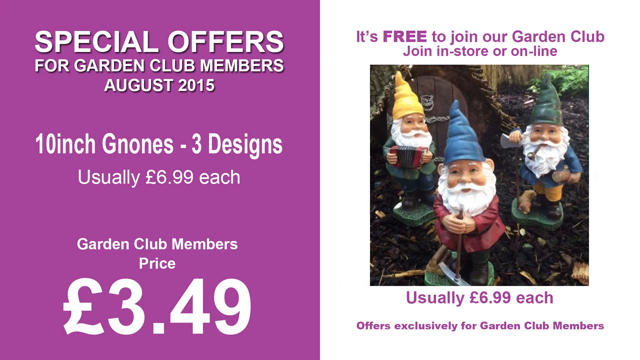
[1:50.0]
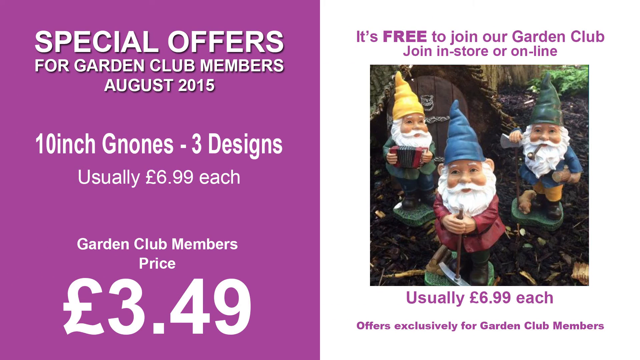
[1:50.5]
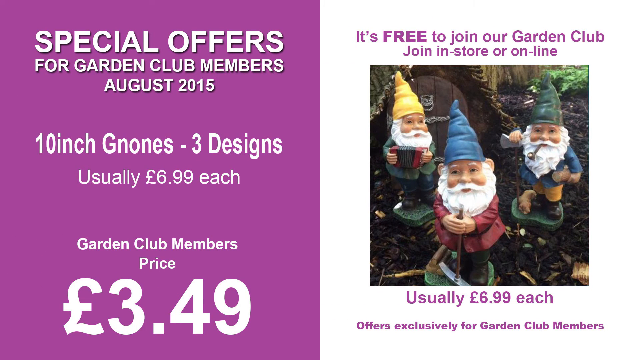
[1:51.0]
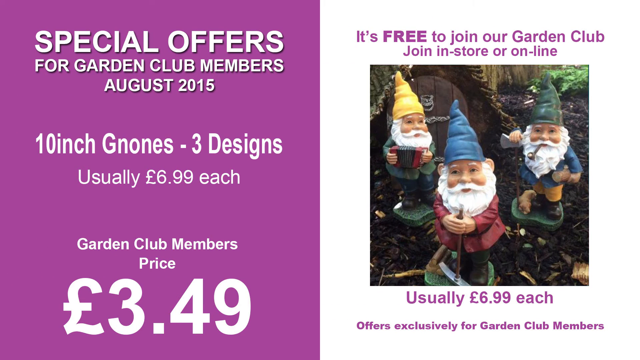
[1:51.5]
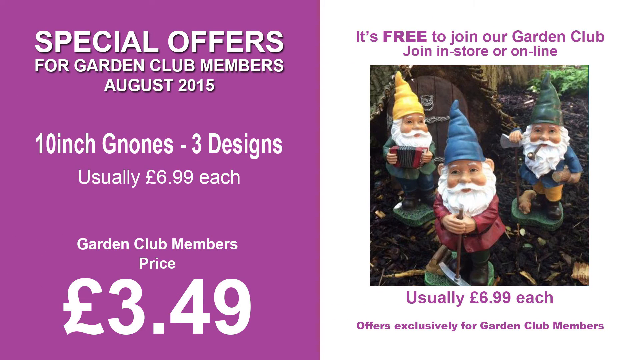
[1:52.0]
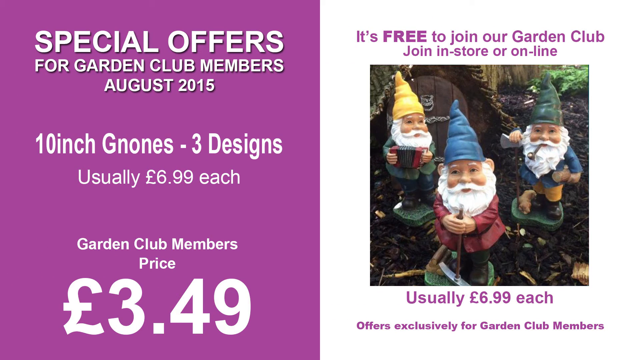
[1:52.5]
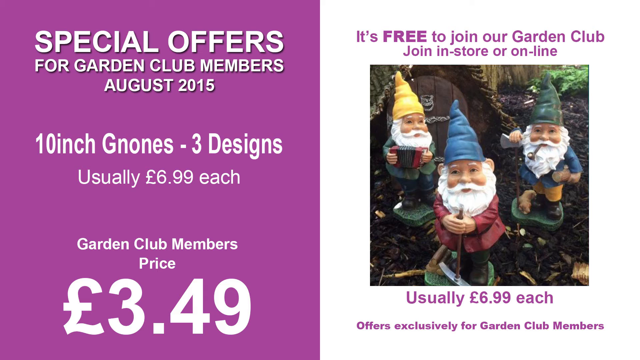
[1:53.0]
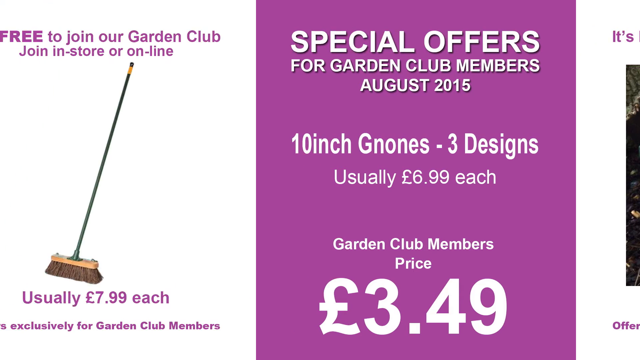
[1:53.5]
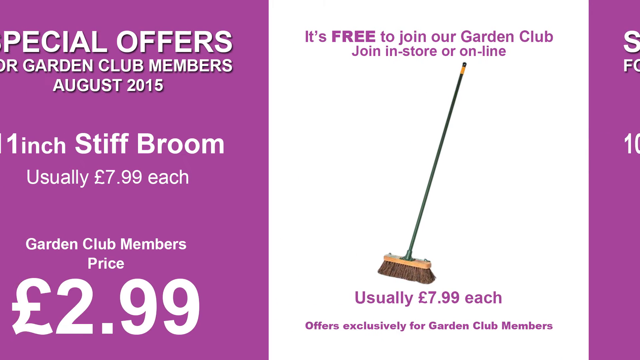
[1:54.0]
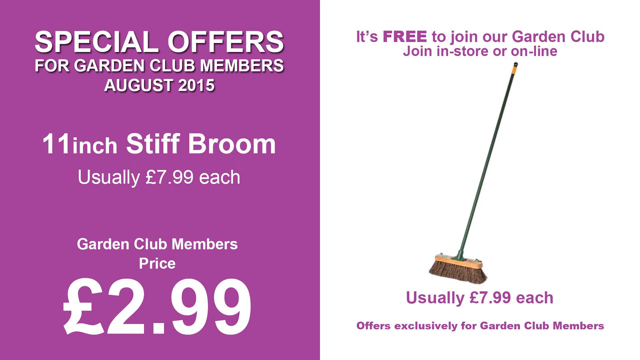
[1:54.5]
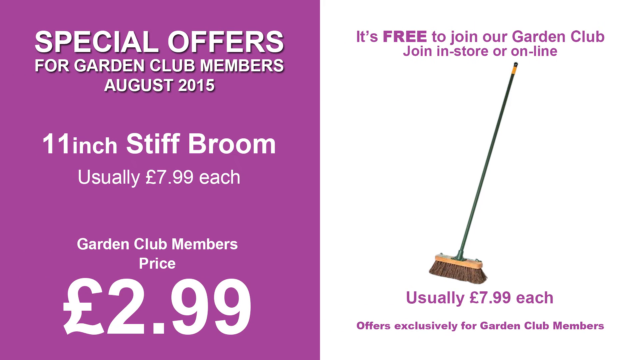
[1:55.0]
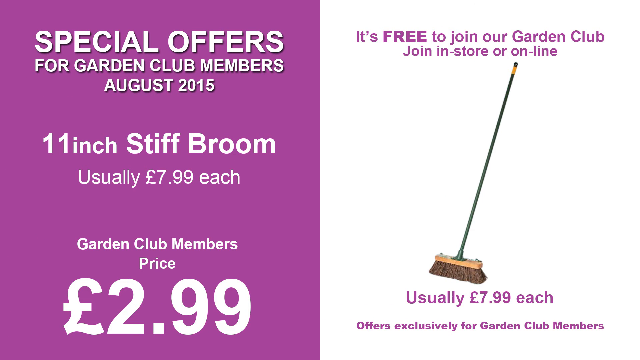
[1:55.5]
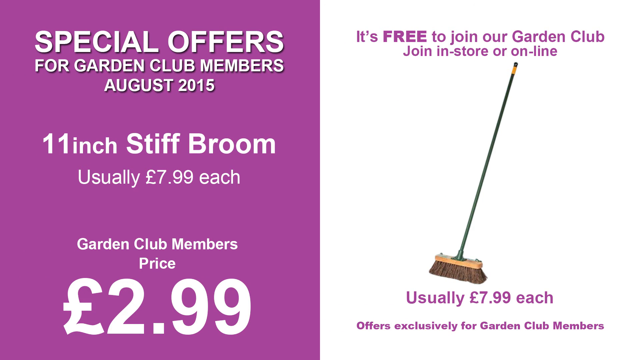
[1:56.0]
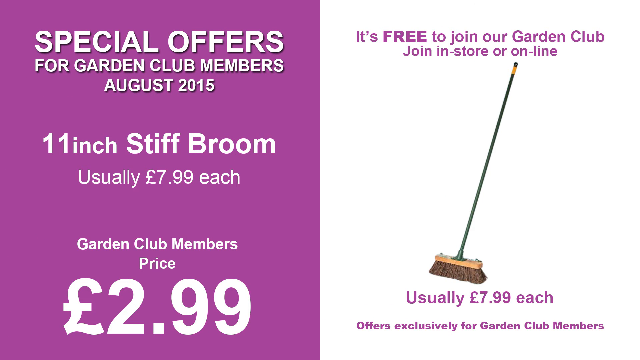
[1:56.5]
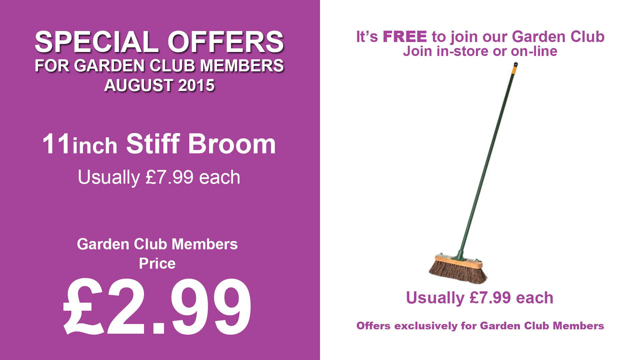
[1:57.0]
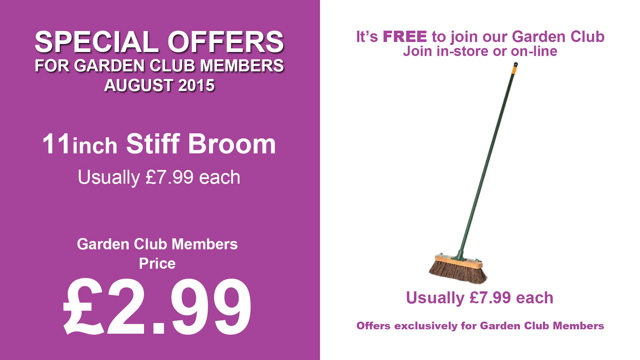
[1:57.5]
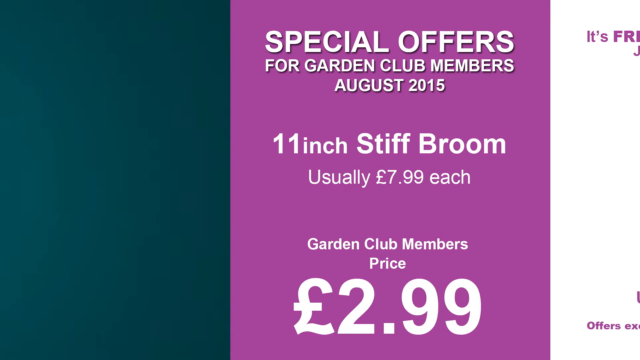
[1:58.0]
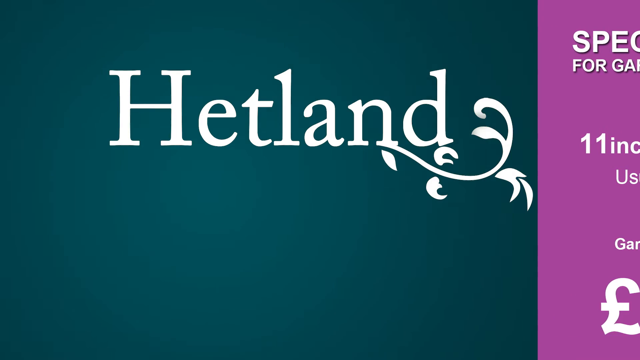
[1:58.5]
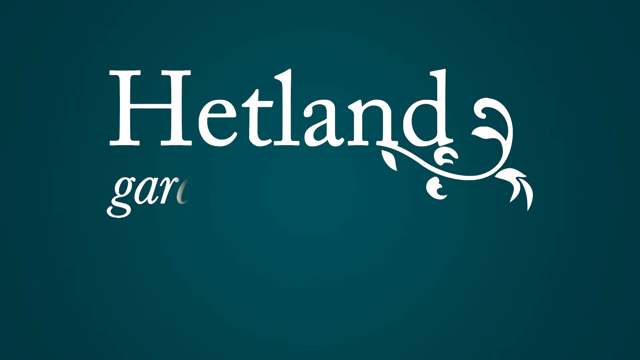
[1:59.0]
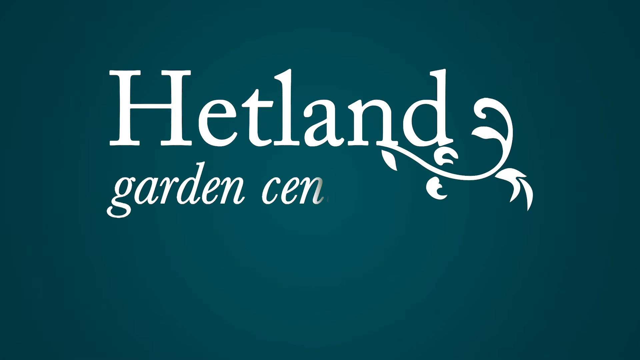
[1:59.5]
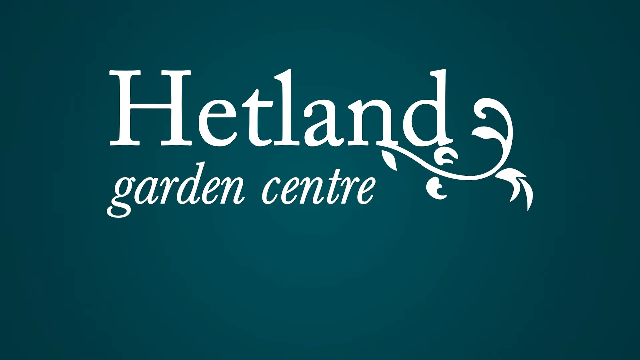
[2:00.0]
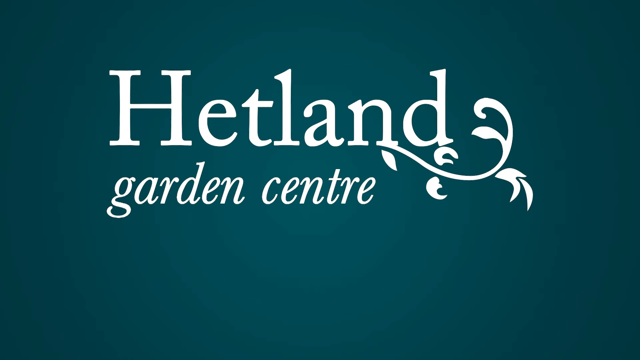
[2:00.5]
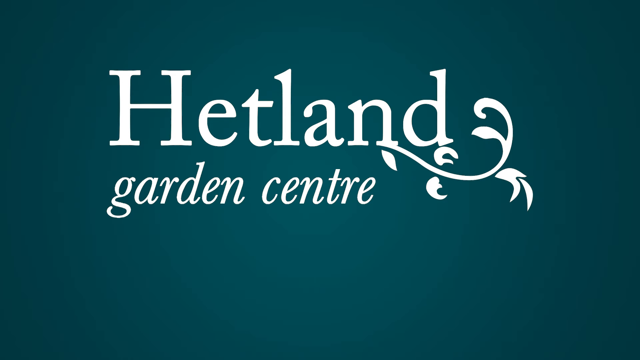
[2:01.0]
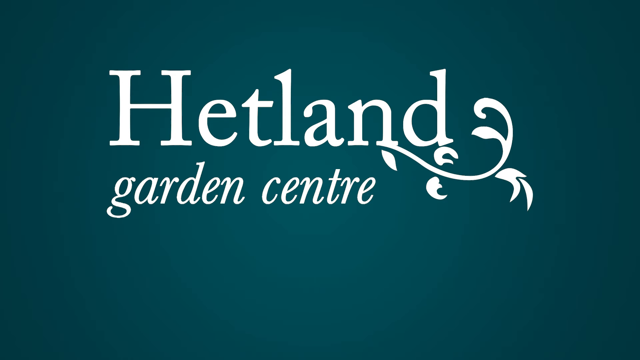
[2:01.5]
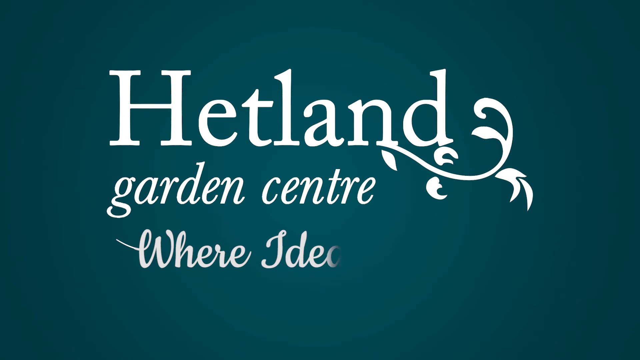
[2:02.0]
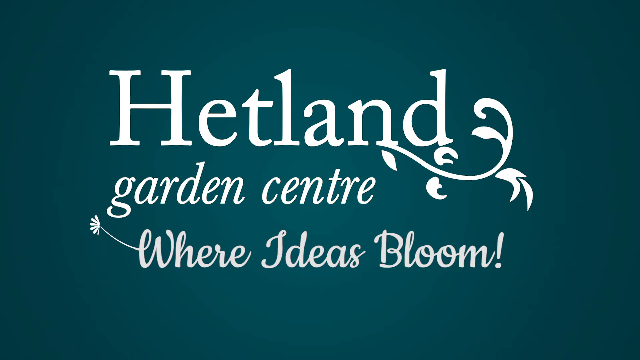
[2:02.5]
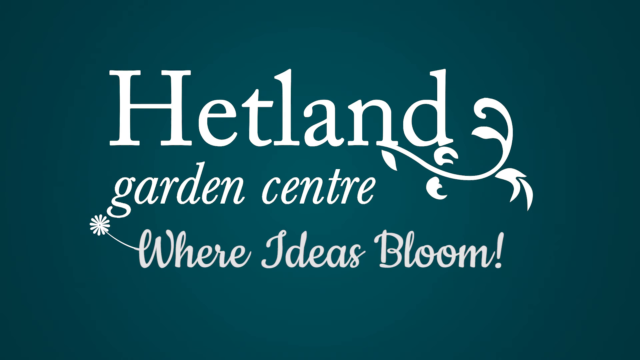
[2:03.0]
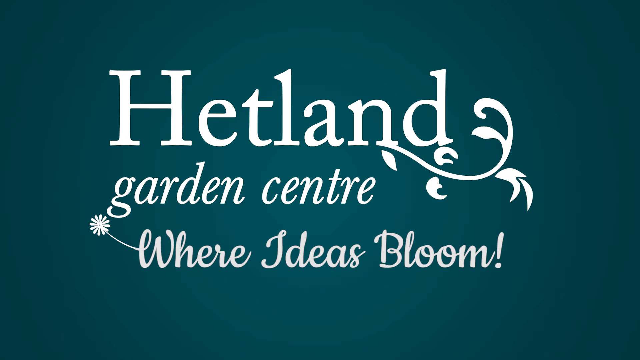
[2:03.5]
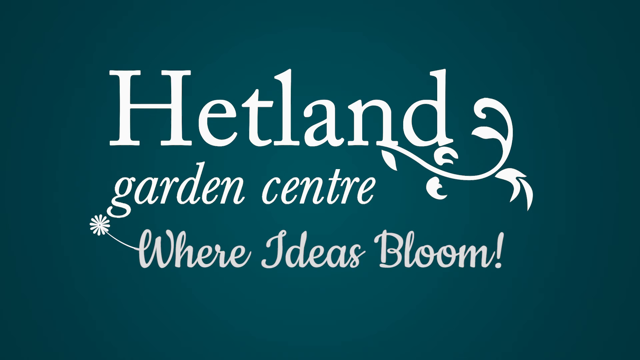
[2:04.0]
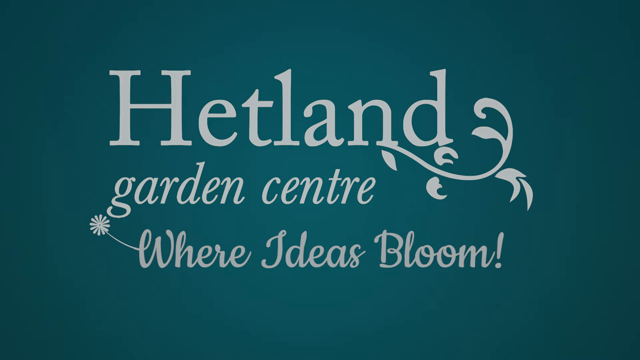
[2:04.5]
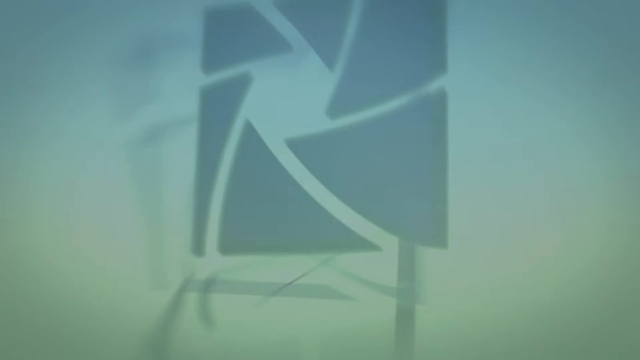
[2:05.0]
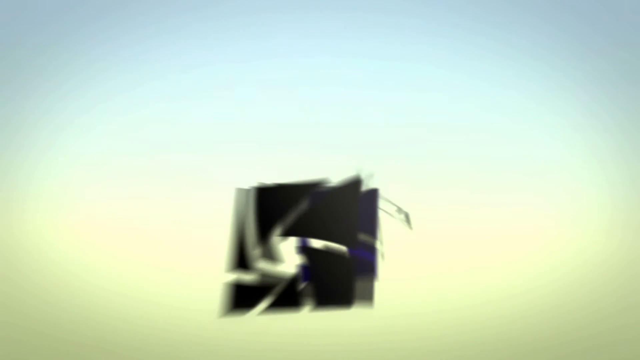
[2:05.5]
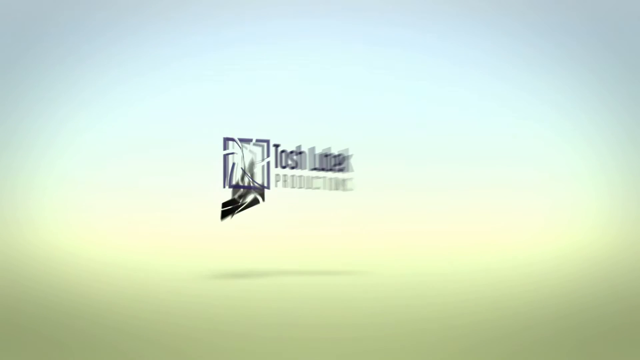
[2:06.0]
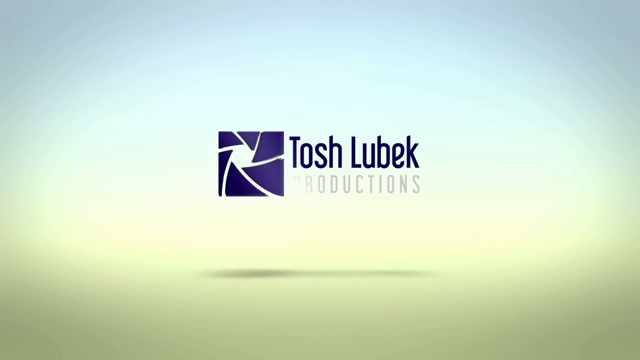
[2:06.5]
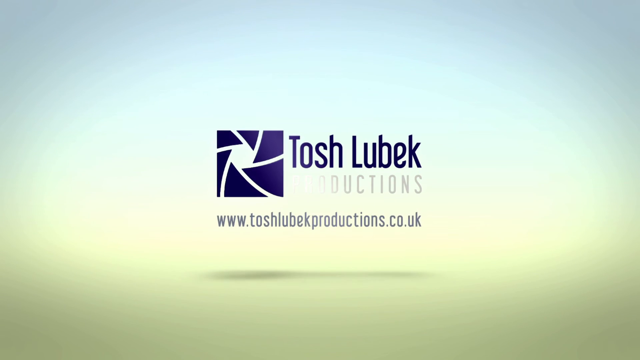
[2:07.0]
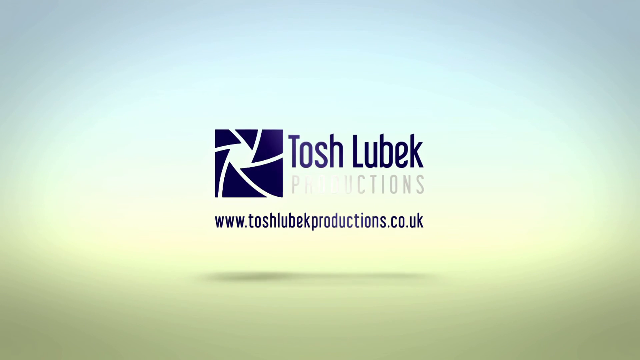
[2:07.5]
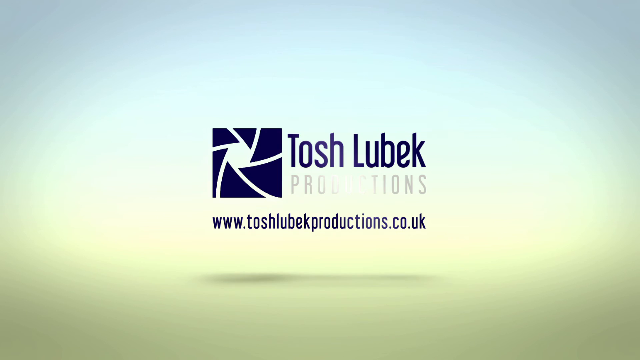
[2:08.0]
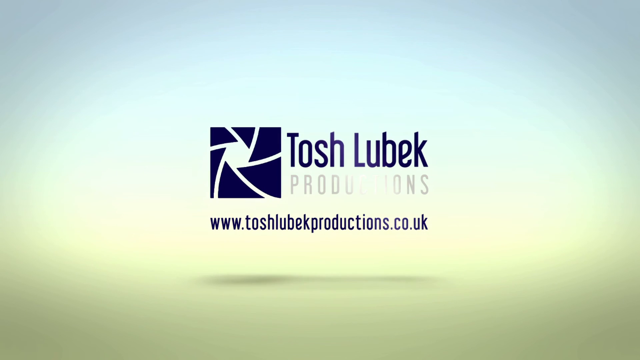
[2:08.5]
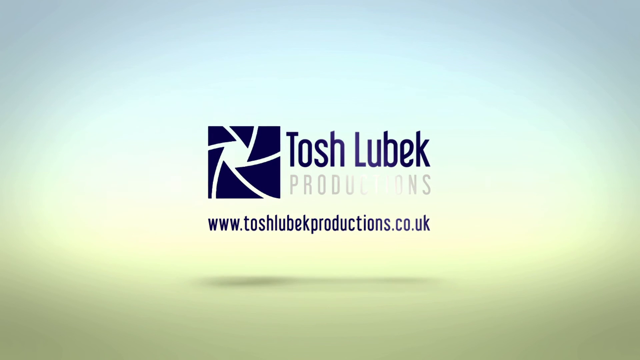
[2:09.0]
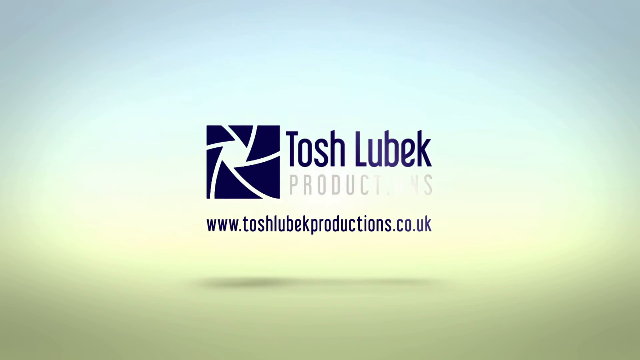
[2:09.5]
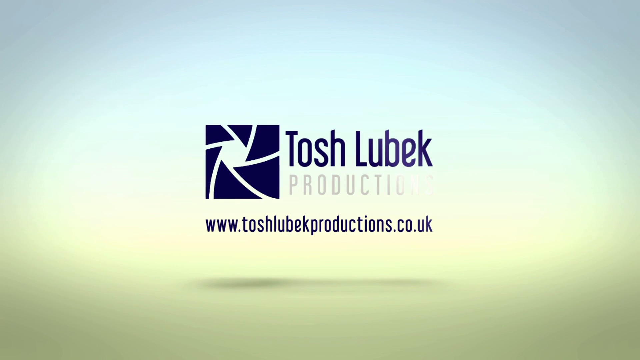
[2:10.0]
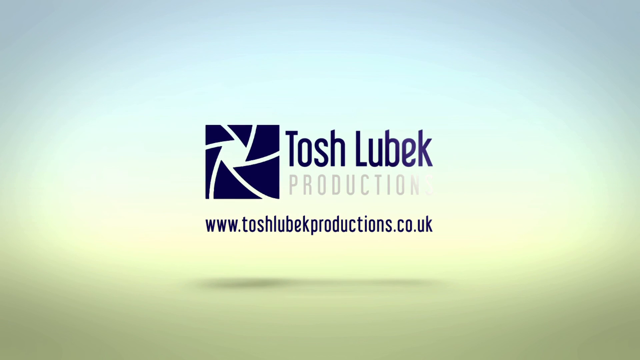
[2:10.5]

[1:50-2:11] The right side reads "$6.99 each", along with text saying it is free to join the Garden Club, in-store or online. Gnomes in green, yellow and blue hats with beards look like Santa Claus; one has a pipe and one is playing an instrument. Where the gnomes are, there is a small wooden, tree-house-like structure, some mulch on the ground, and some green leaves in the background behind the green gnome. The left side reads "special offers", "August 2015", "10-inch gnomes", "three designs" and "$6.99 each", apparently with all three available for $3.49 under the special offer. A broom is shown: "$7.99", "special offer", "11-inch broom", "Hetland's Garden Center". The video is an advertisement. At the end, "Tosh Lubek Productions" appears on a greenish background.